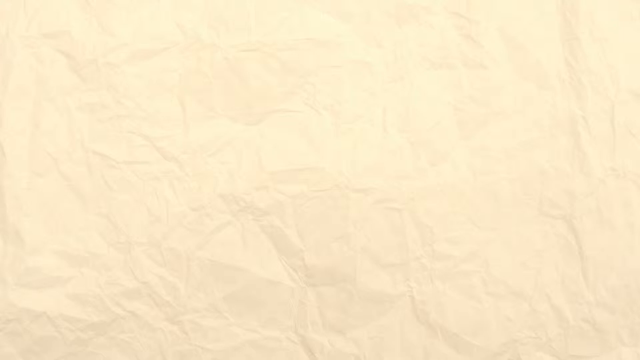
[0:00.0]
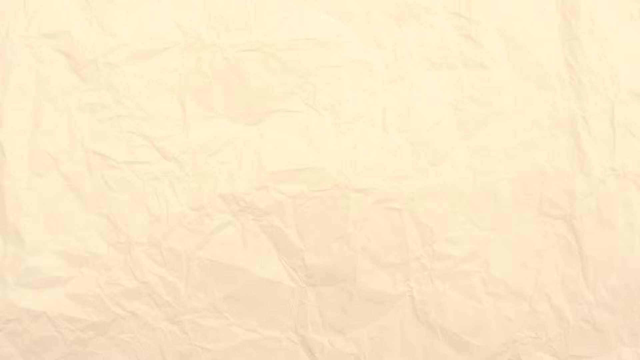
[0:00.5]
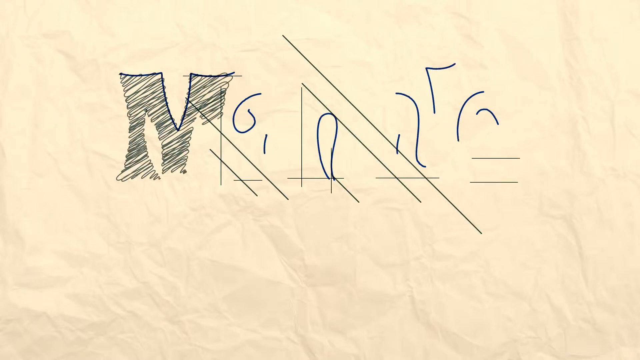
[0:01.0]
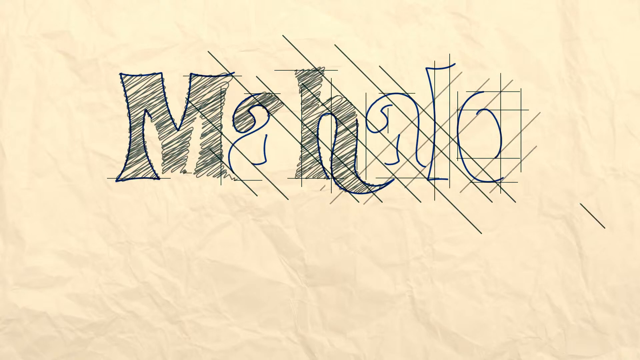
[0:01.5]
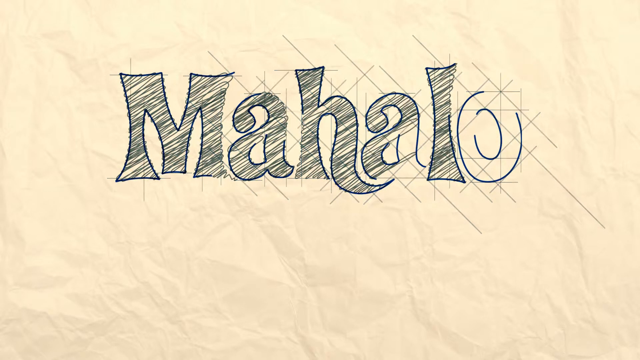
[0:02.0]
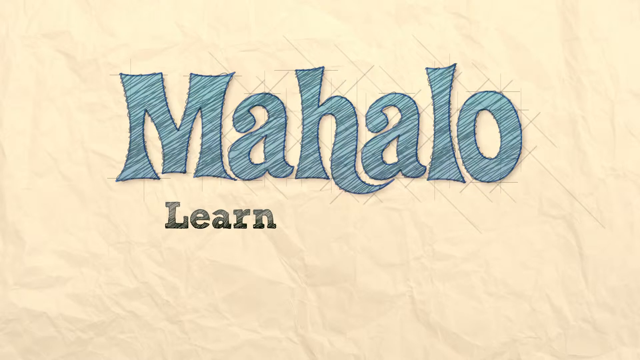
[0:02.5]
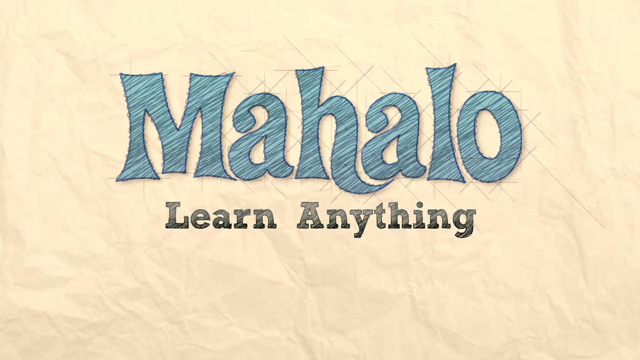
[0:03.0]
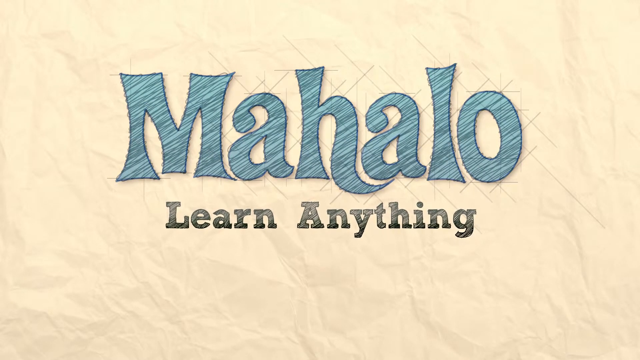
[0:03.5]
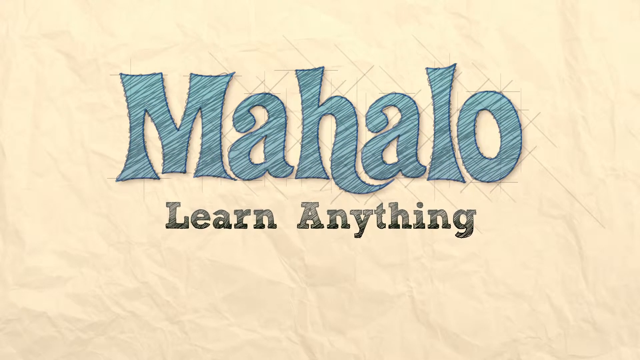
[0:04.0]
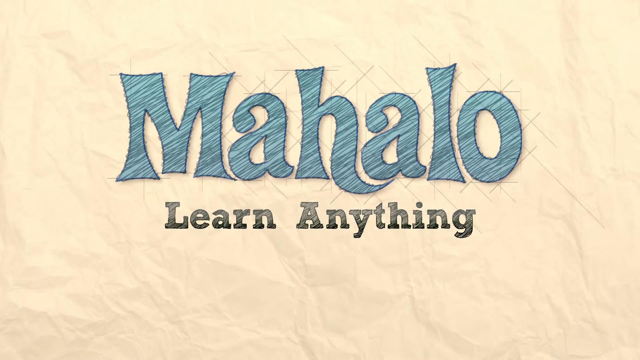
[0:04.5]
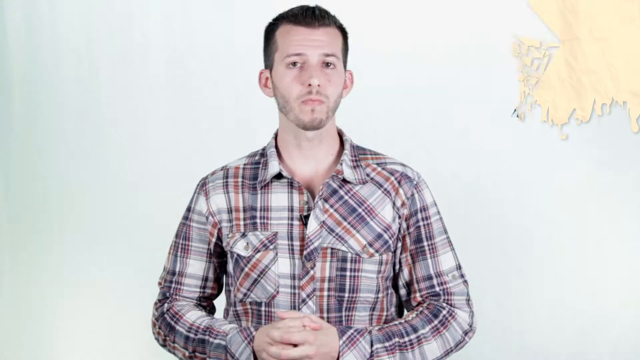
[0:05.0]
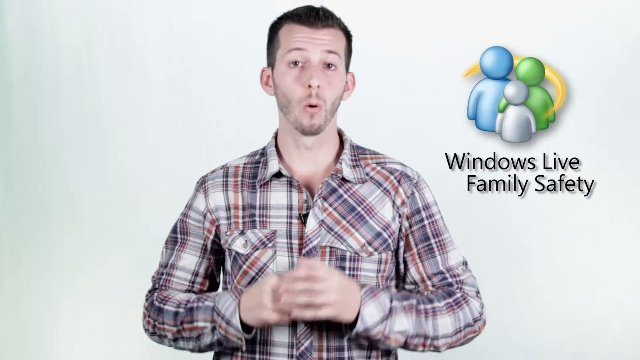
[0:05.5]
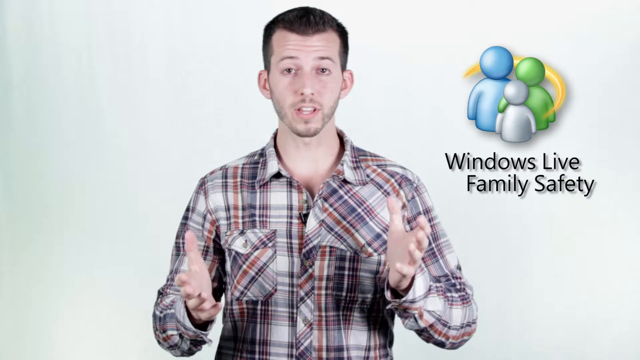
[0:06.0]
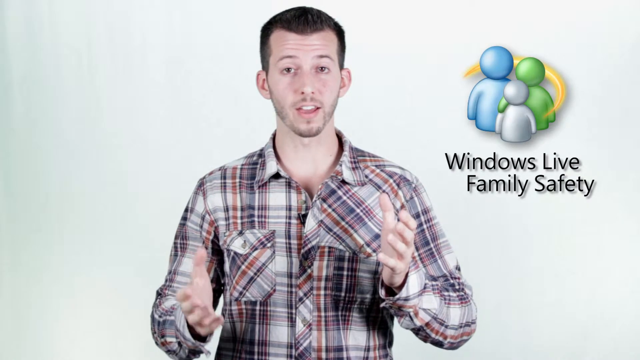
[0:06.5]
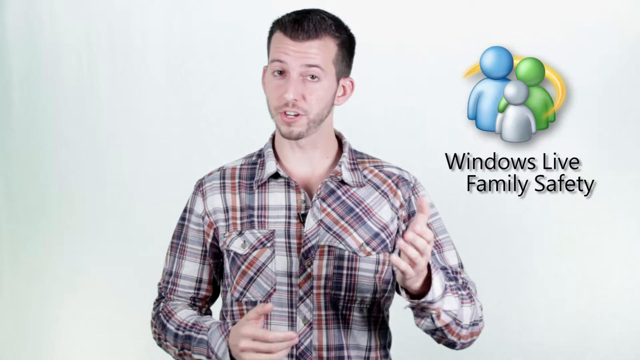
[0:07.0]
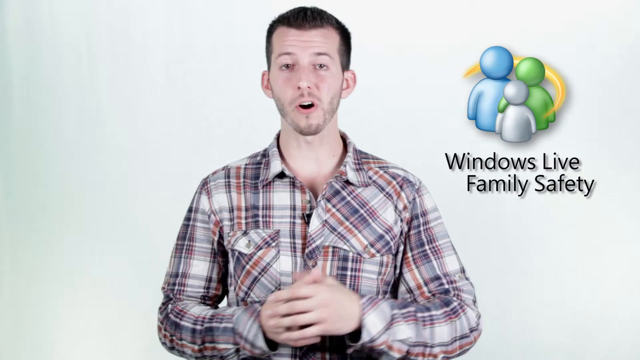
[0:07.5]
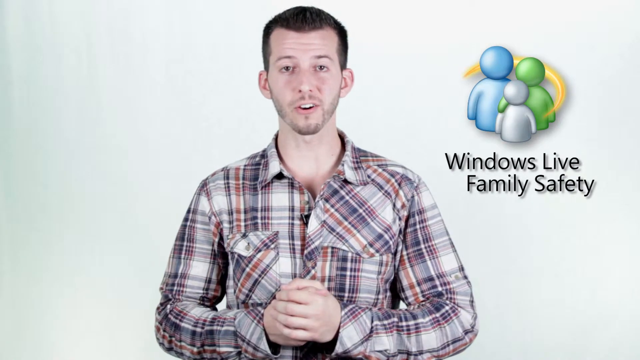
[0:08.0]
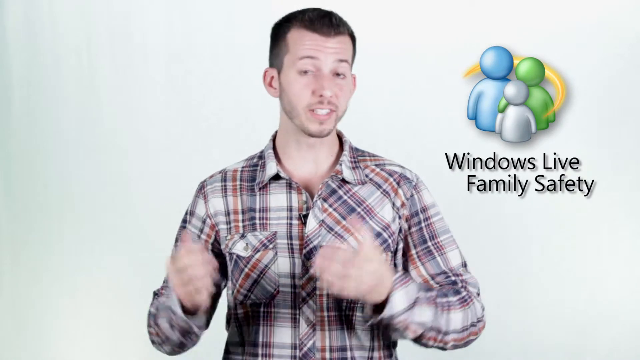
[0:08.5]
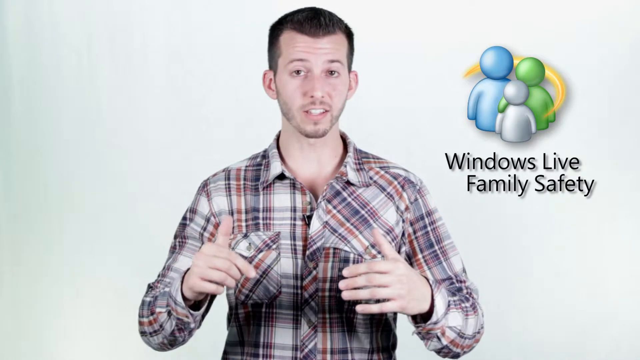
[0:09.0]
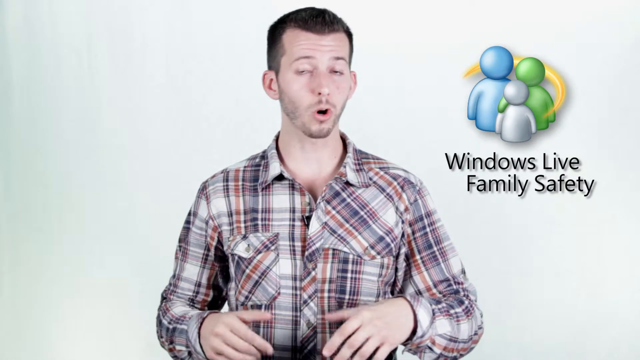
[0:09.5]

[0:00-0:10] A beige-looking paper fills the background, covered in wrinkles; some look sort of squarish, and creases run diagonally, up and down, seemingly at random everywhere. What looks like a pencil special effect writes "Mahalo" very large with a blue outline. The H at the bottom flares out like a bell bottom, and the M looks fancy. The lettering shades into blue and appears to have hasty, scribbly lines in it. Underneath, "learn anything" is written in black, also shaded with mainly diagonal lines. Behind "Mahalo" there are hatch markings, some going up and down behind the M, and a bunch behind the A, including a couple of pairs of diagonal parallel lines. The black text looks like it is shaking. A man who looks kind of aggravated looks toward the viewer. He wears a flannel long-sleeved shirt with reds and blues in it and a double pocket, and his hands are in front of him, clasped to his right. A stick-figure picture of a family shows a blue figure, a green figure and a child in white, with the green figure's arm over the child's shoulder. Underneath it reads "Windows Live Family Safety", with "family" indented a little. The man starts speaking, using his hands, talking directly to the viewer and pointing down a little.